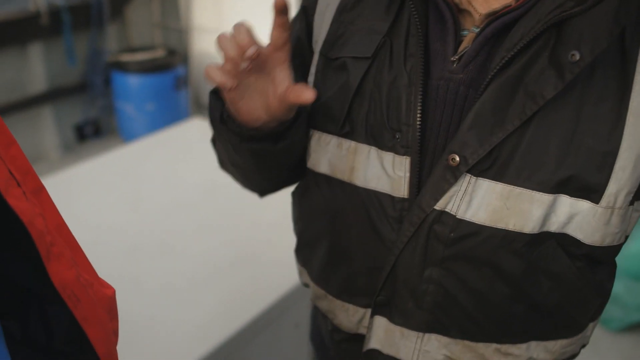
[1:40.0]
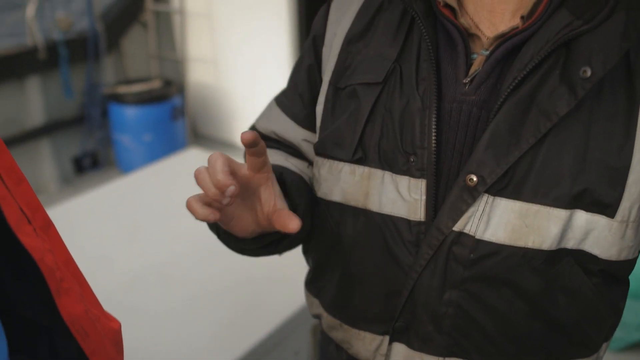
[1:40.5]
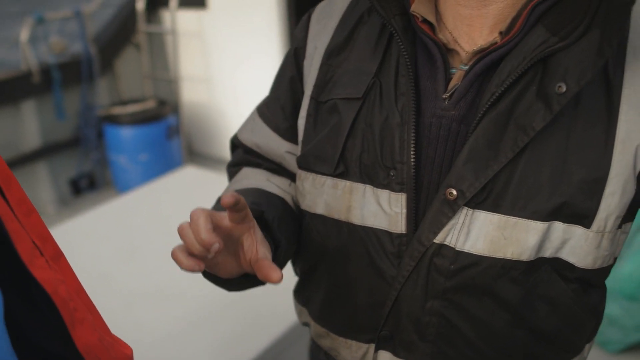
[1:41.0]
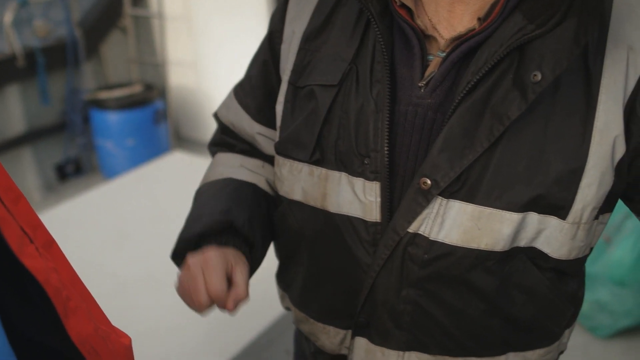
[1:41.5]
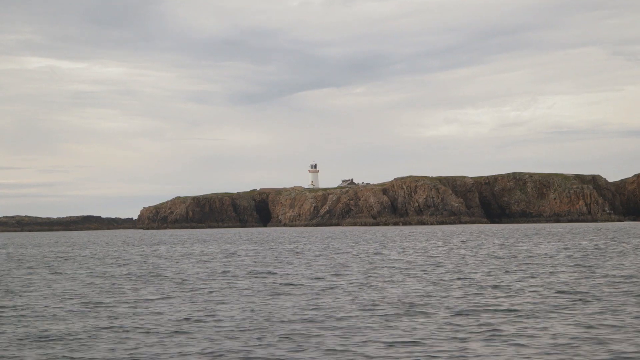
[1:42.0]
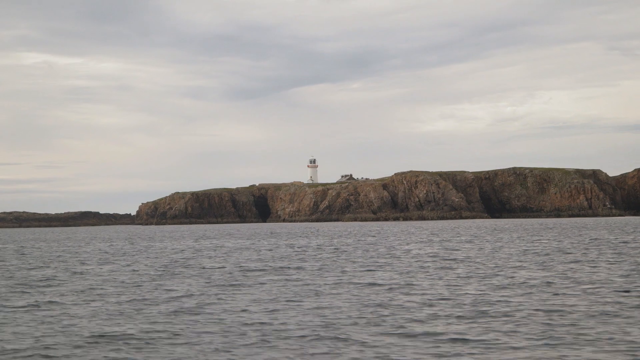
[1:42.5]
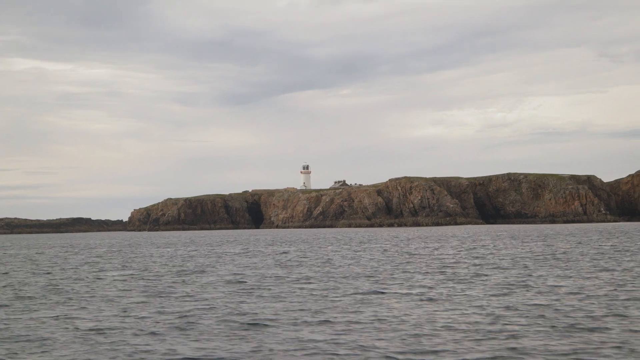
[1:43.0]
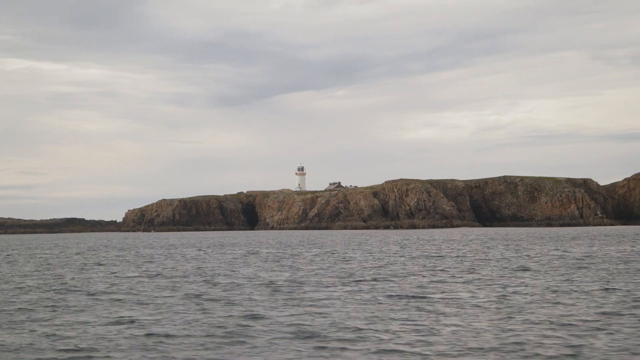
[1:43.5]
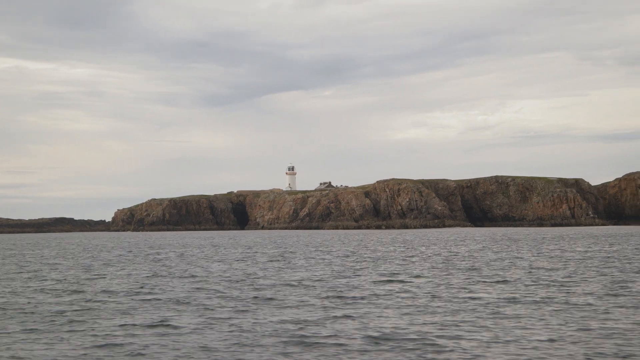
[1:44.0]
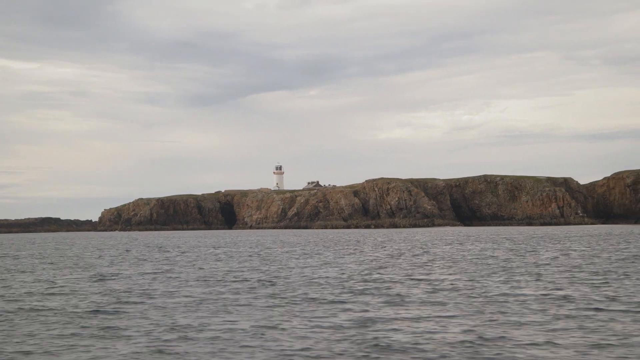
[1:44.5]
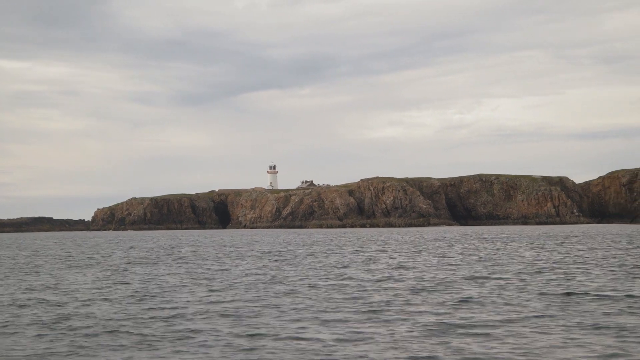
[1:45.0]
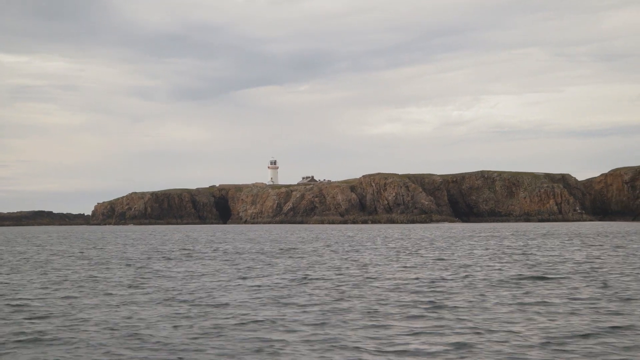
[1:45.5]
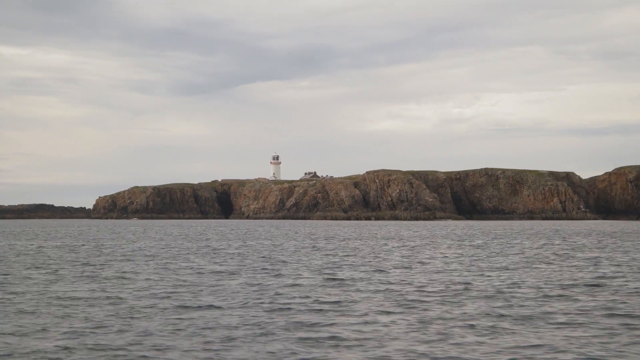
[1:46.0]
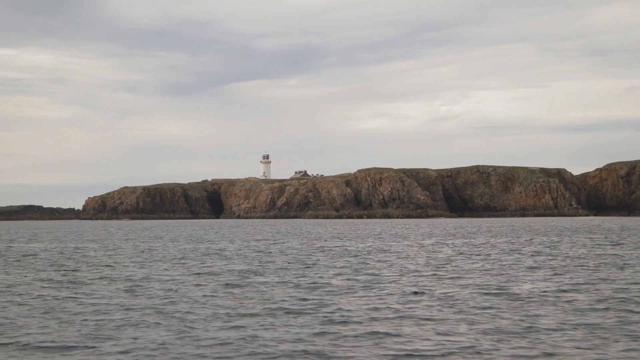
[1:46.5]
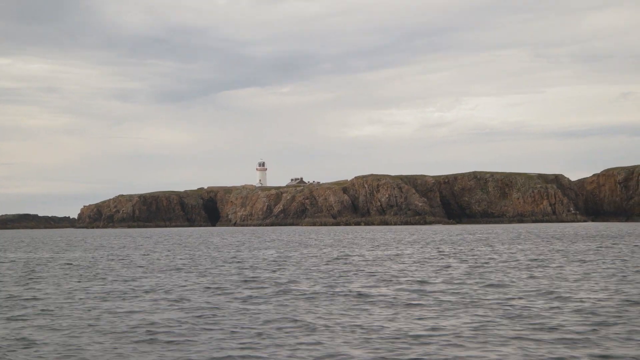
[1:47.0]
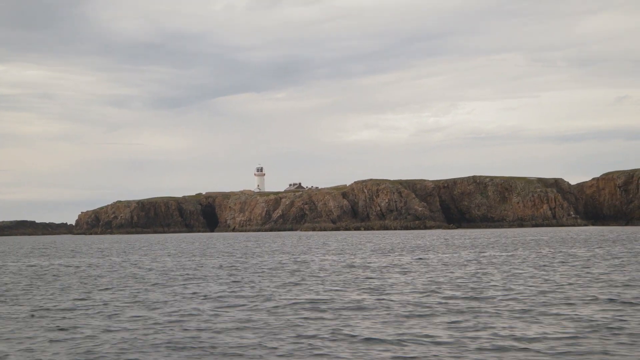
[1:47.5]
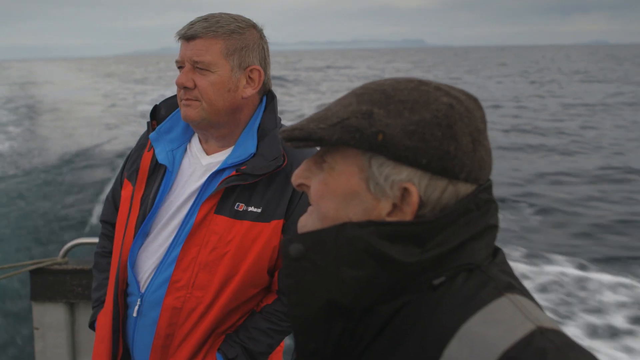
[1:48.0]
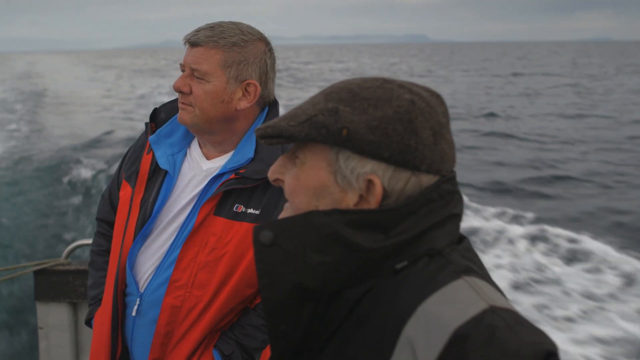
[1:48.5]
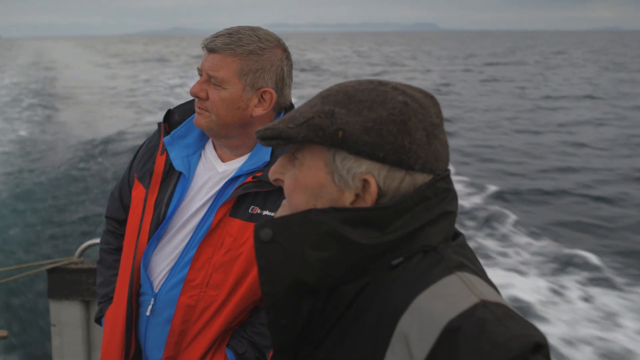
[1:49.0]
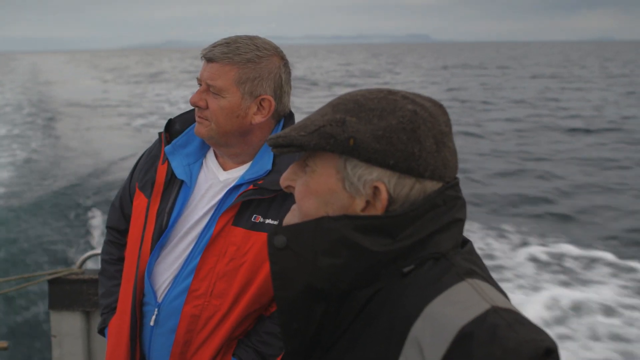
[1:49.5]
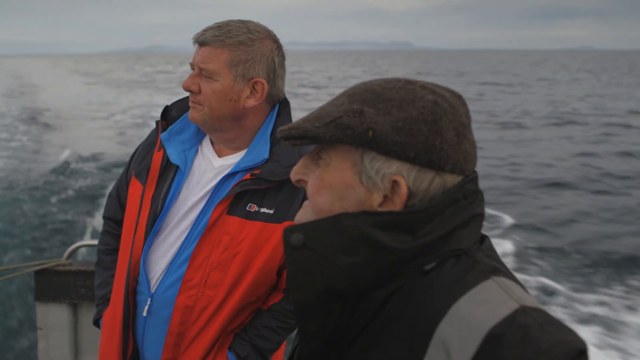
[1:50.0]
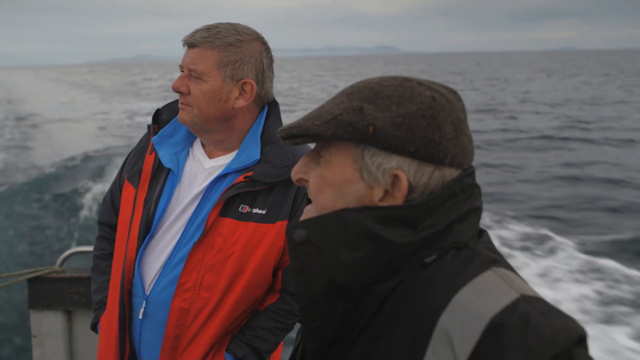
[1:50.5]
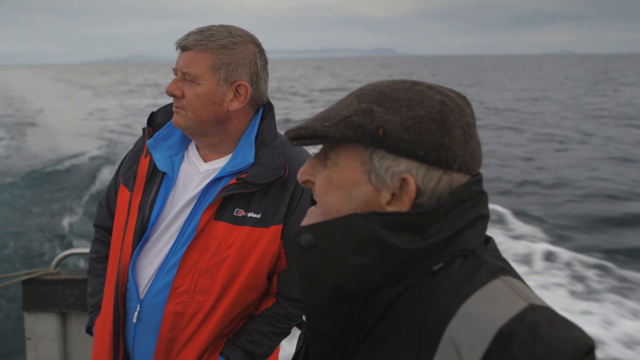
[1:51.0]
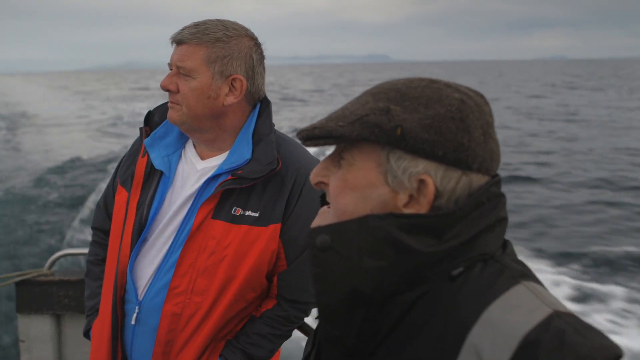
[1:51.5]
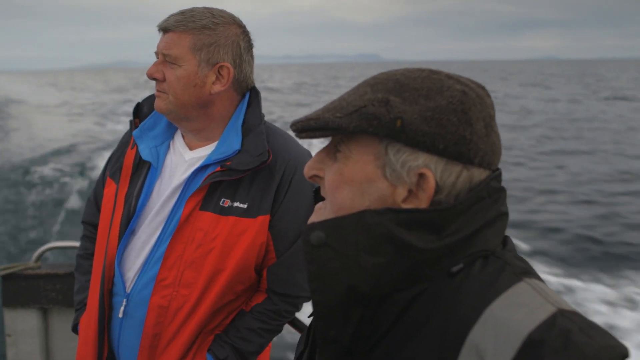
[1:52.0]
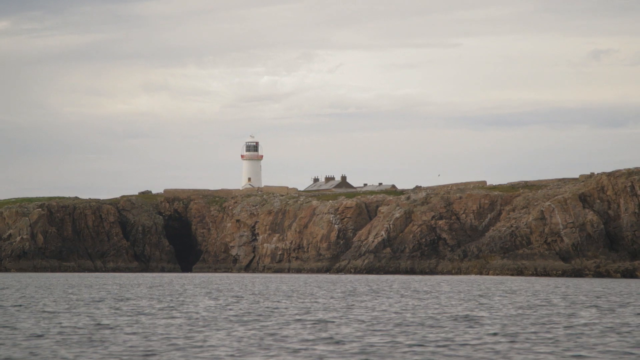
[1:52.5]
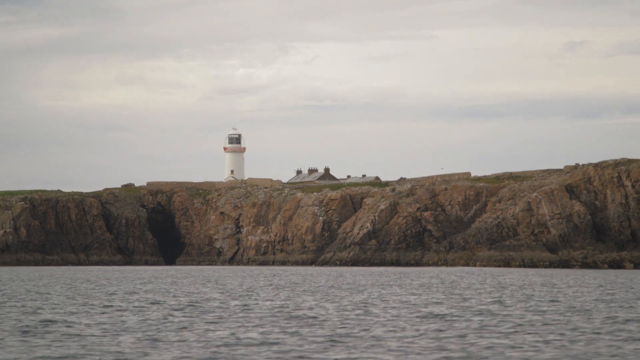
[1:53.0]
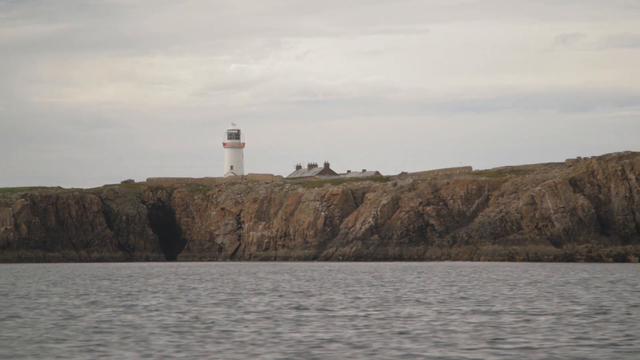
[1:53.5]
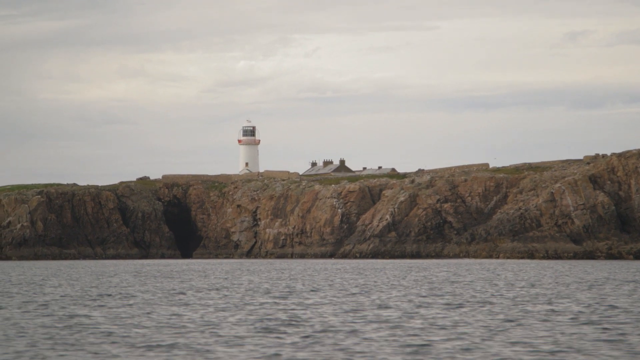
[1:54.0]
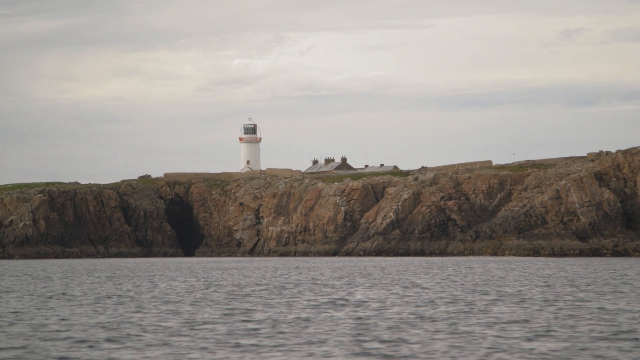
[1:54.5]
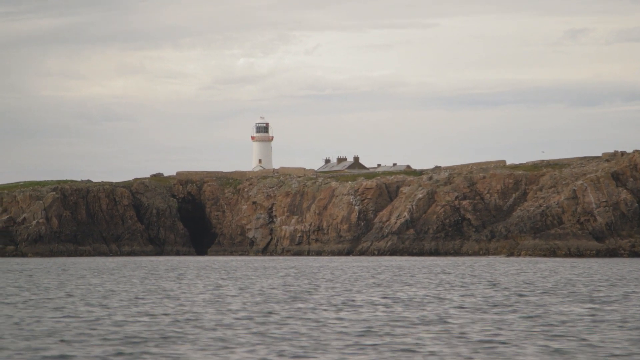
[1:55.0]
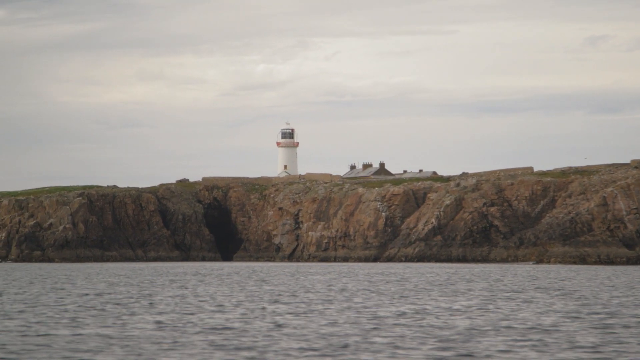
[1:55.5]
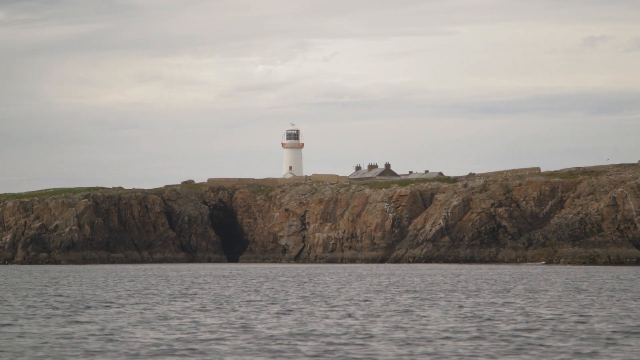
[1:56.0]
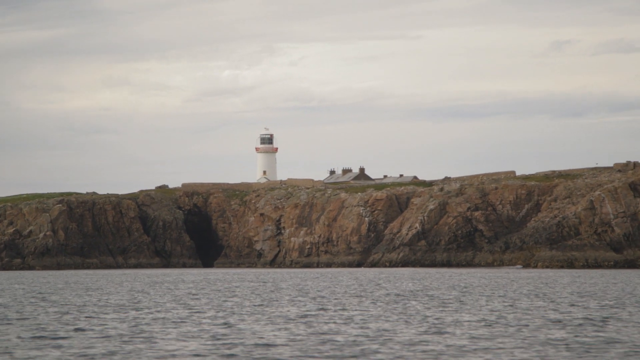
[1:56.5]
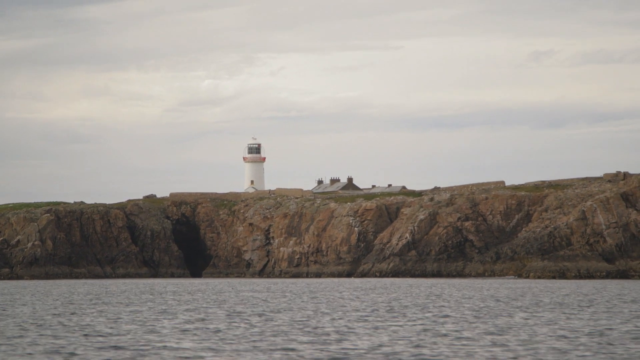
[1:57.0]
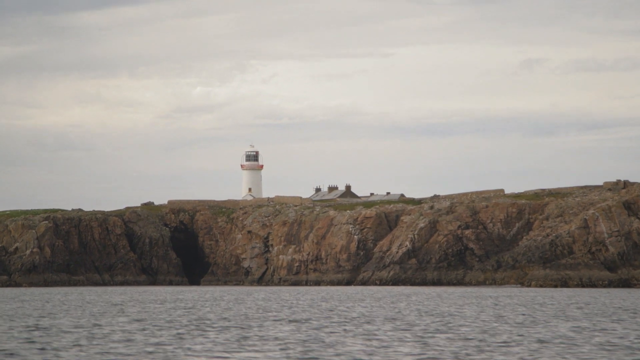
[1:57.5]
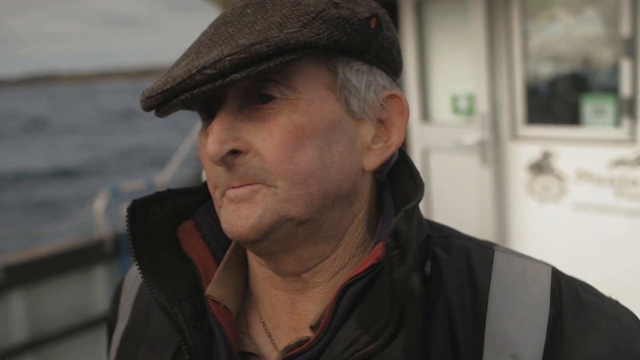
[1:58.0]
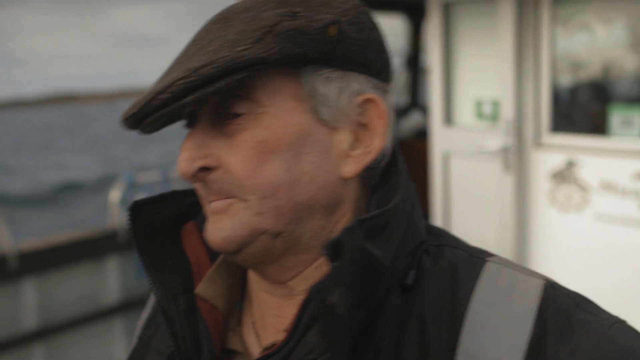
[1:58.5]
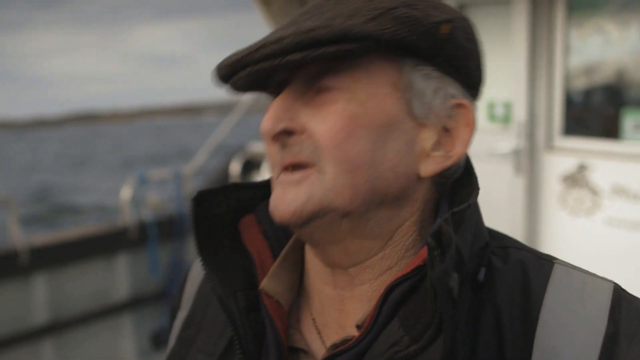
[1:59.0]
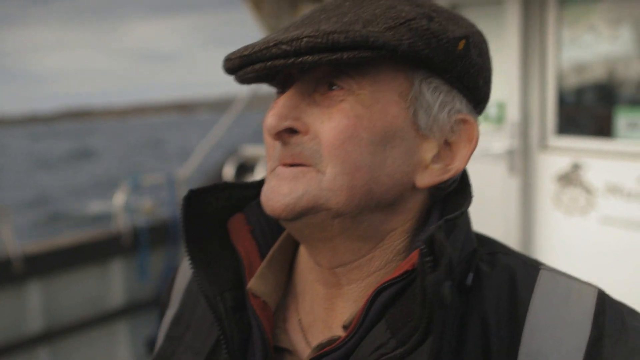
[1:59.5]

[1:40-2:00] The old man on the ship is still talking. More scenes of the lighthouse are shown as the ship passes by at high speed on the sea, and they are standing along the coast of the plateau. The old man wears a black jacket with a white stripe going through it.